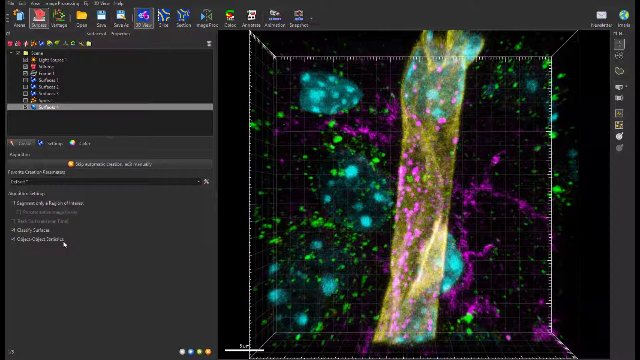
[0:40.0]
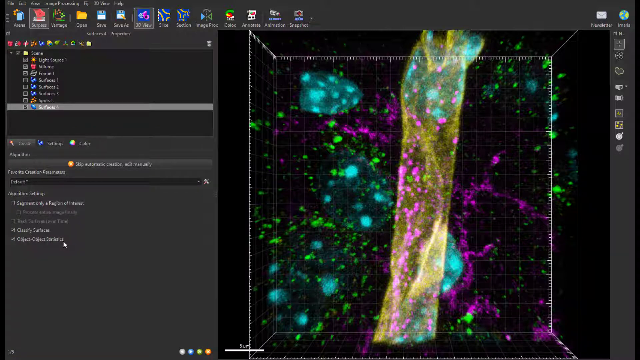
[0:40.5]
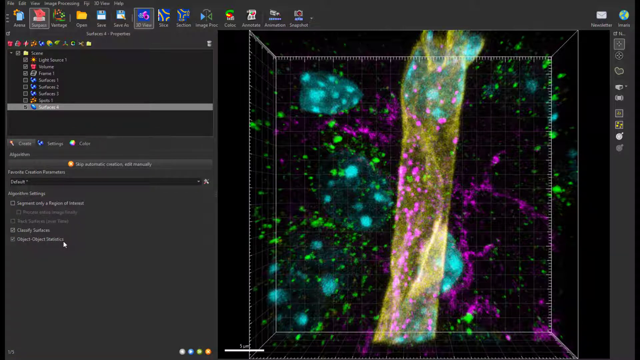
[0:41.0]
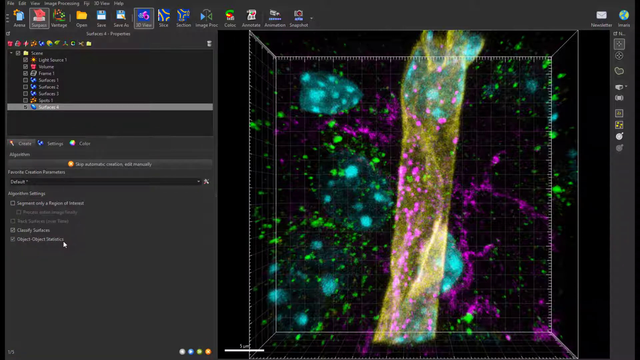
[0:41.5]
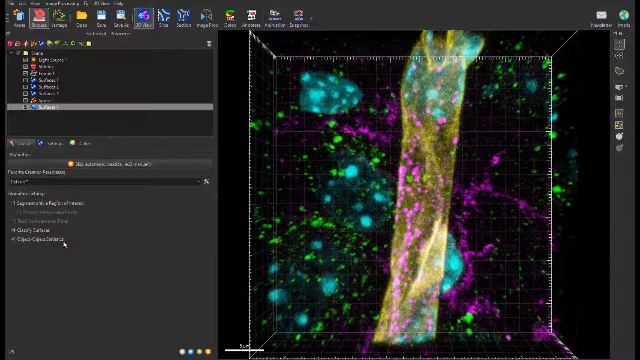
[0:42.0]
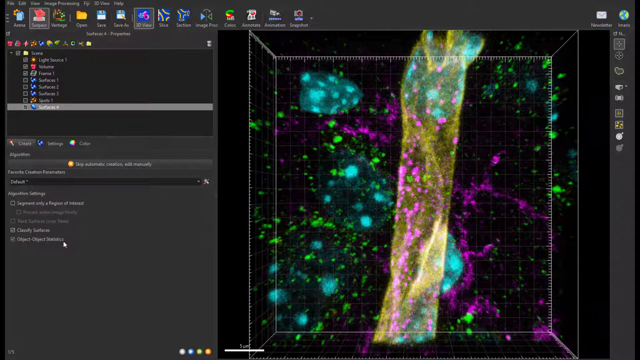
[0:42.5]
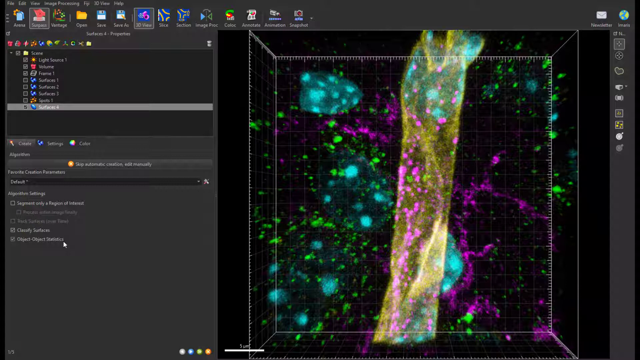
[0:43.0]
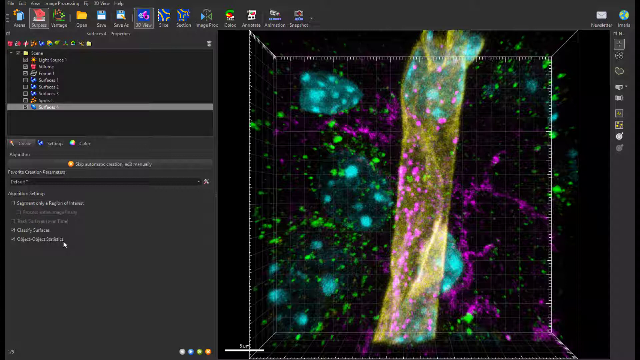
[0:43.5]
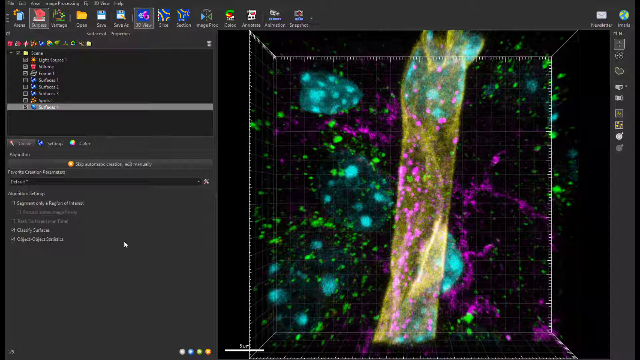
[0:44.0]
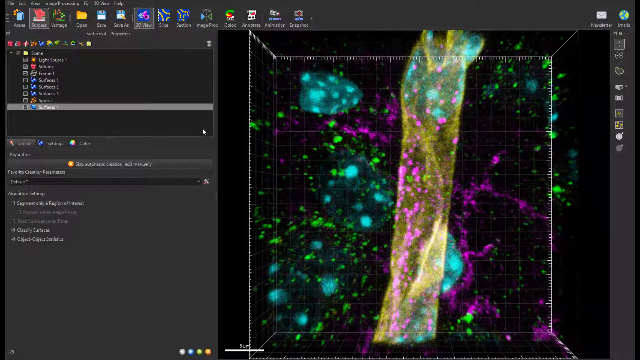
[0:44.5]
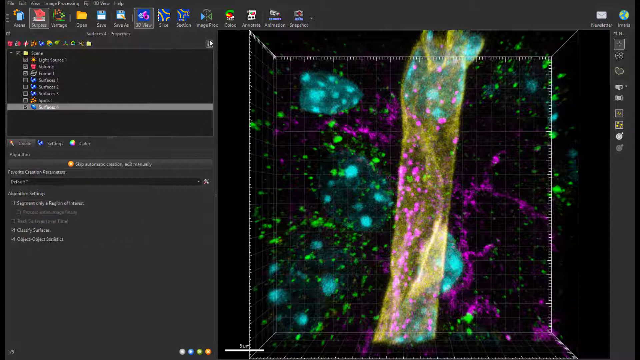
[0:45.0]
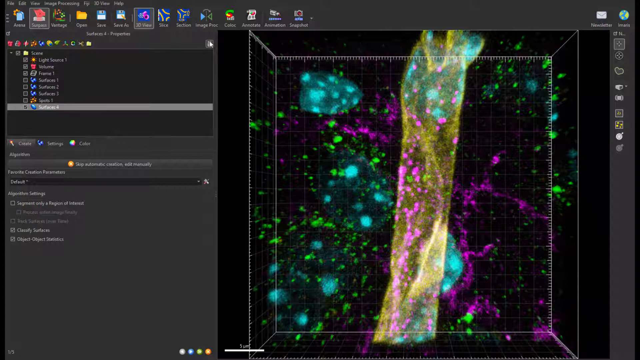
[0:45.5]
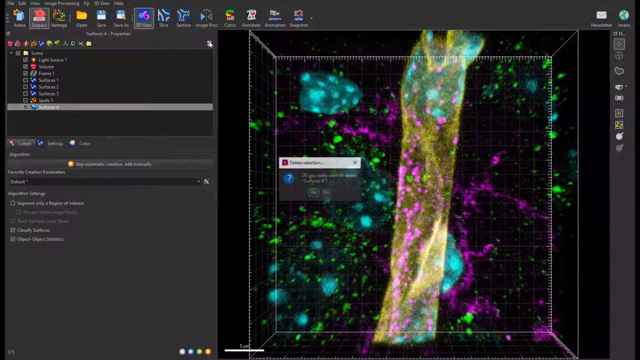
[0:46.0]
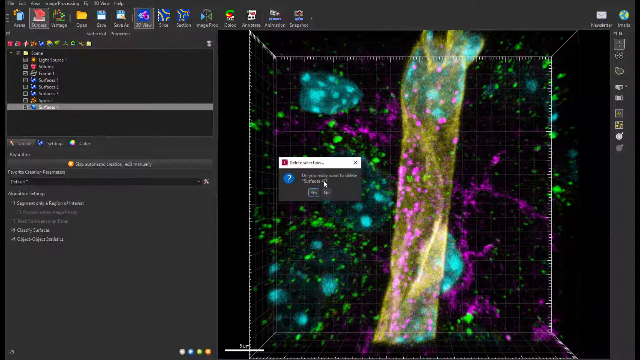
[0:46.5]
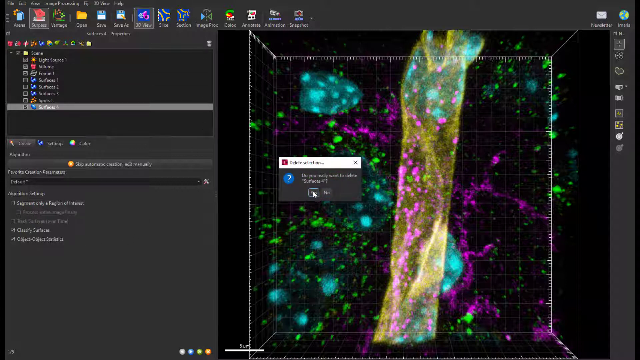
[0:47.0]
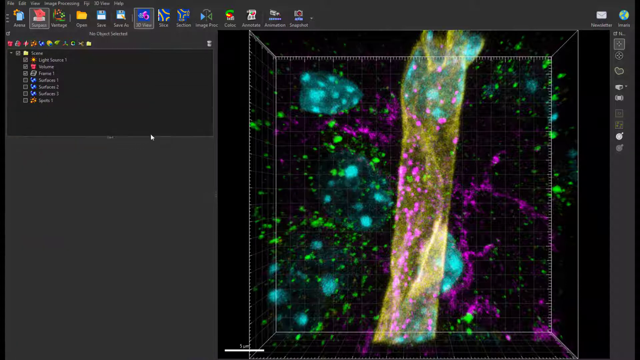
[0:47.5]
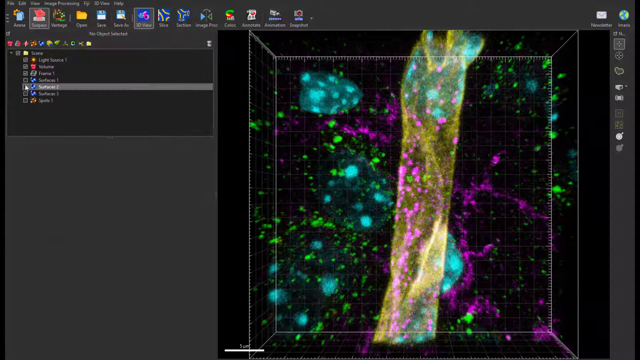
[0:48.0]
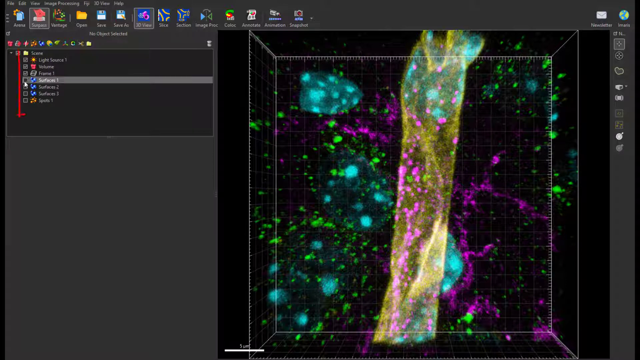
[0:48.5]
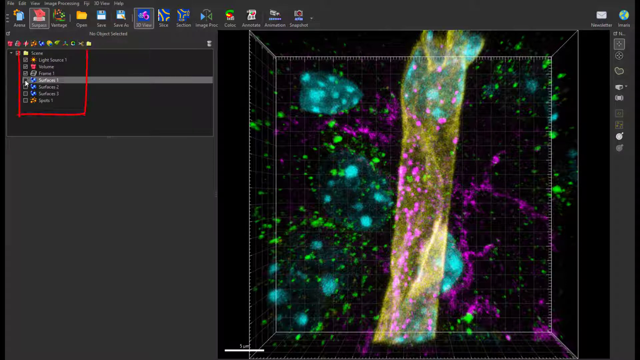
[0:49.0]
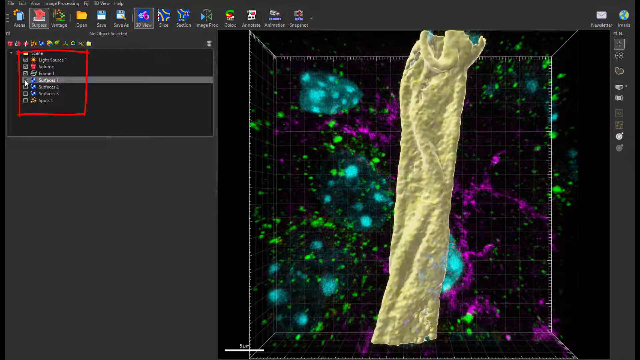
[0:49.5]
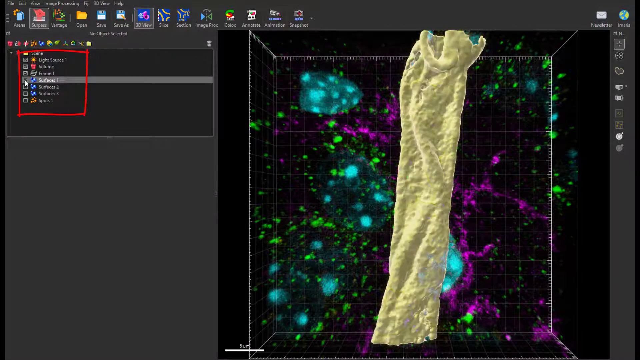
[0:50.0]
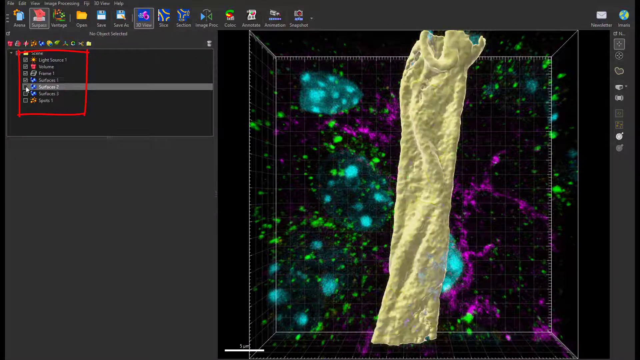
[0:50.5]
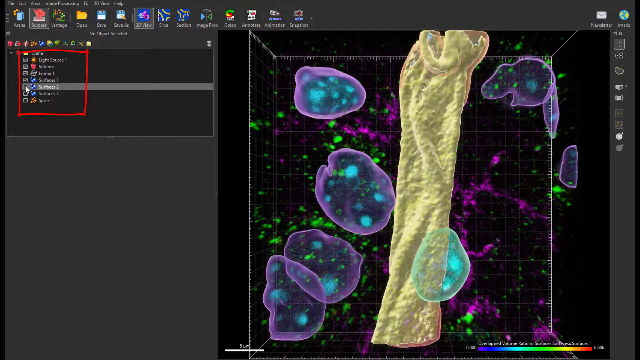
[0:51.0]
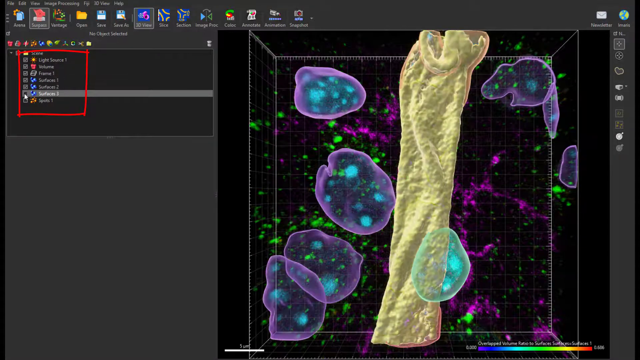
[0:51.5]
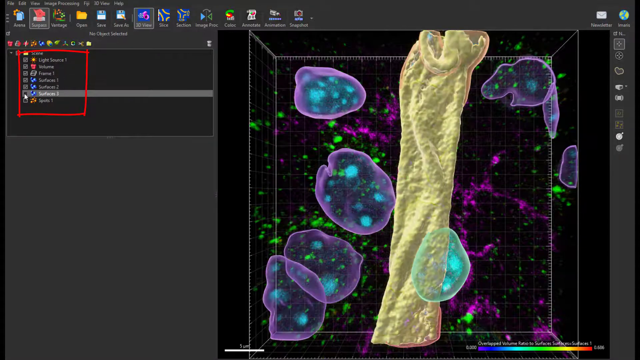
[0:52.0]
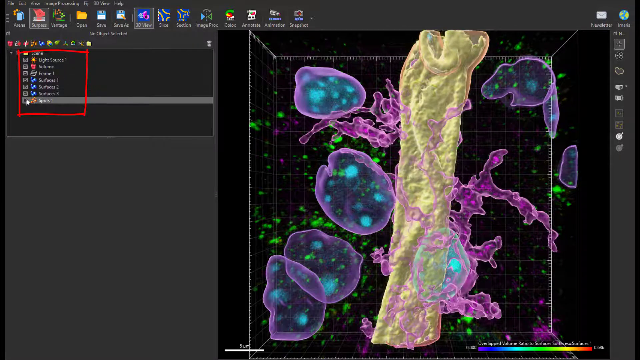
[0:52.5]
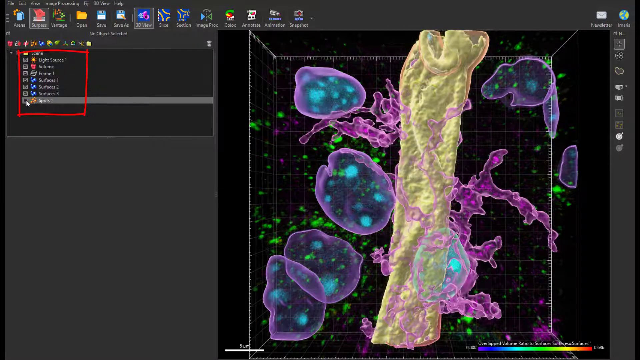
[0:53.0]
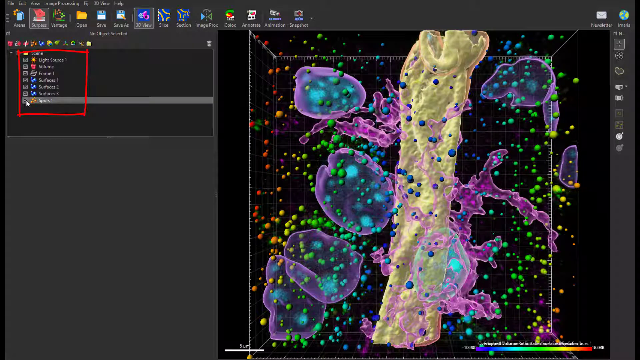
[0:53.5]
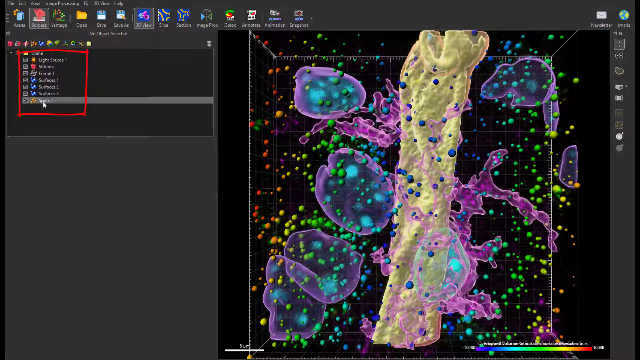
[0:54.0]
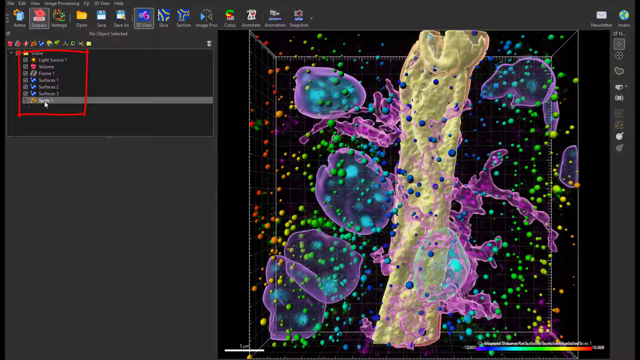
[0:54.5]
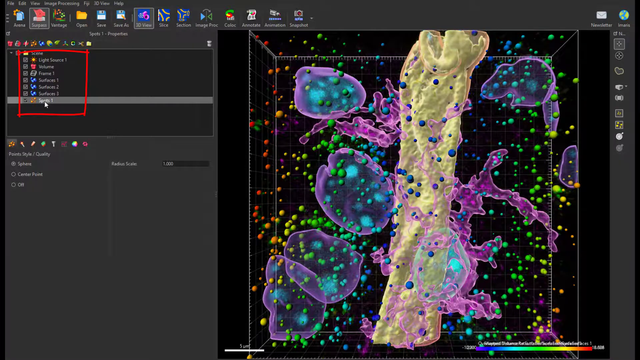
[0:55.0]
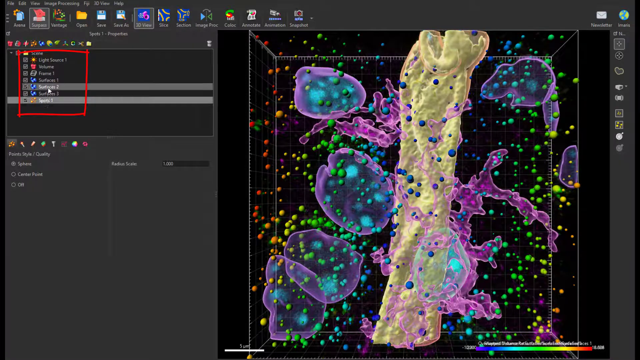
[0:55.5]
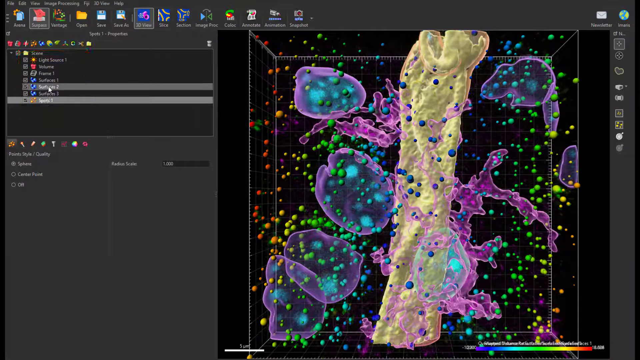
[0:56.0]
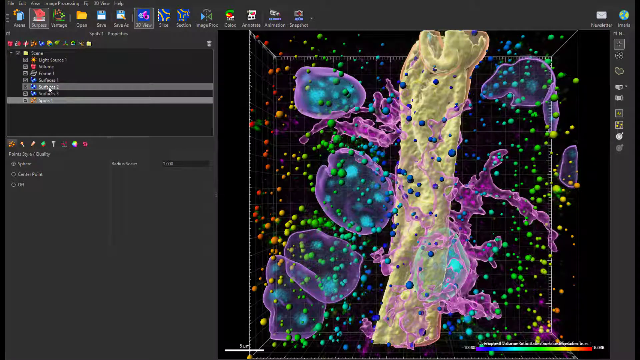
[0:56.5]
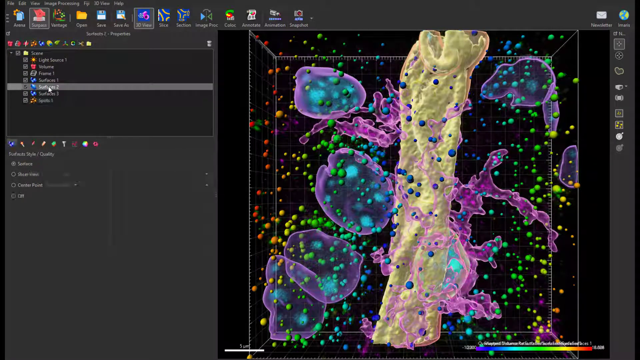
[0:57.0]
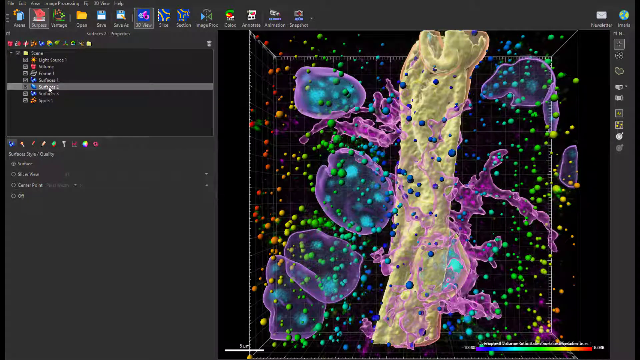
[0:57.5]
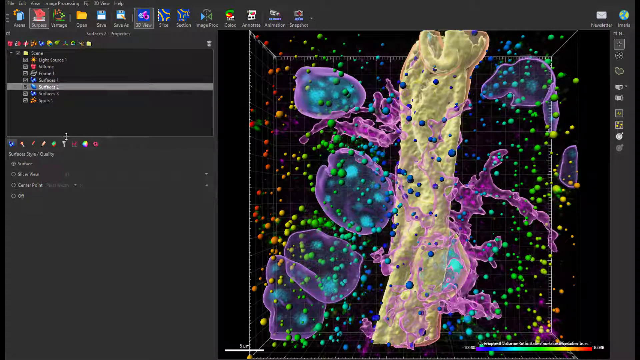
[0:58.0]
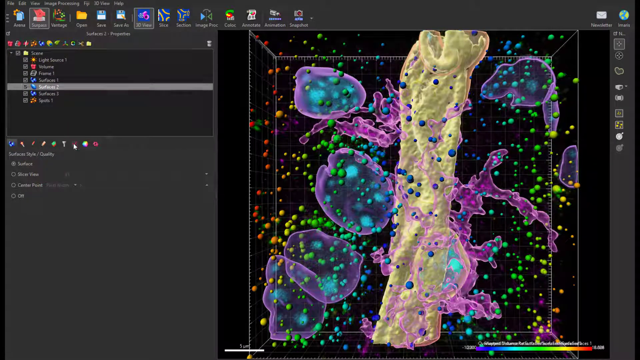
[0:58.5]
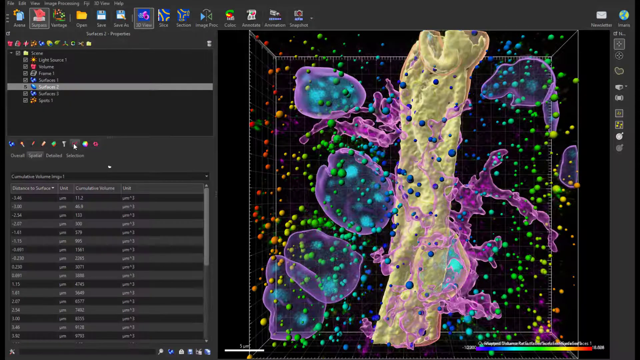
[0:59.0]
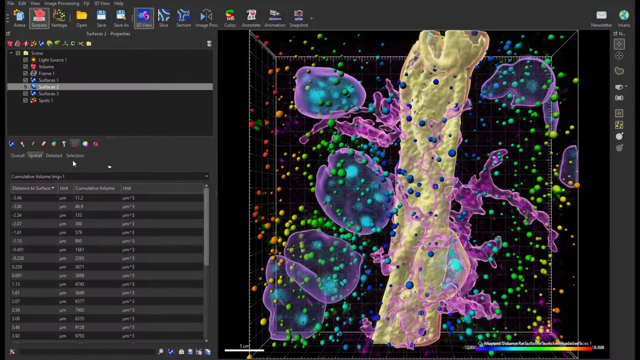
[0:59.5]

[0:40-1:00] A computer screen shows some type of software, resembling an animation. A mouse pointer makes a red outline and affects the image. The view shows how the colorful image is made from an image uploaded into the software; it is less zoomed in, so more is visible. It starts with what looks like a bone of some sort, beige in color, along with a magenta color and a teal color. When someone clicks on one of the links on the left side of the screen, the colorful balls pop up. From left to right they are red, different shades of orange, different shades of yellow, green, a couple of shades including a lighter green at the bottom, turquoise, and blue; the bone part is blue; then blue and turquoise, different shades of green, different shades of yellow, and orange.